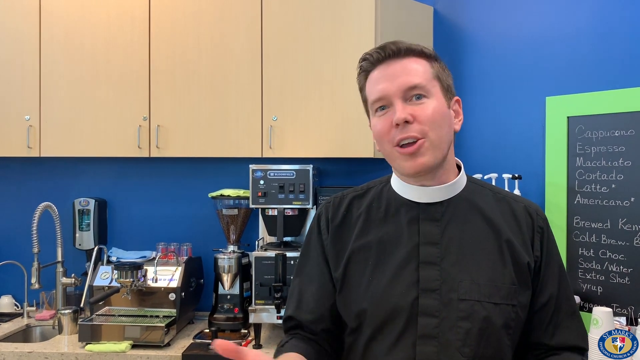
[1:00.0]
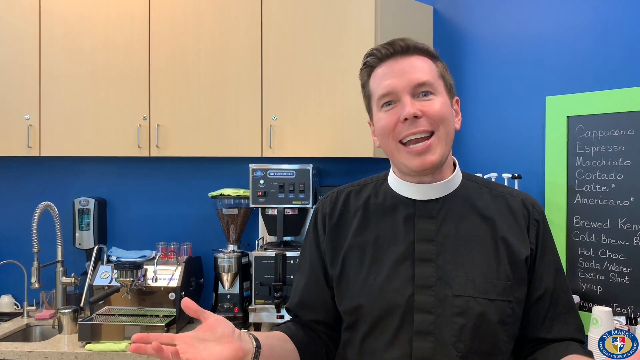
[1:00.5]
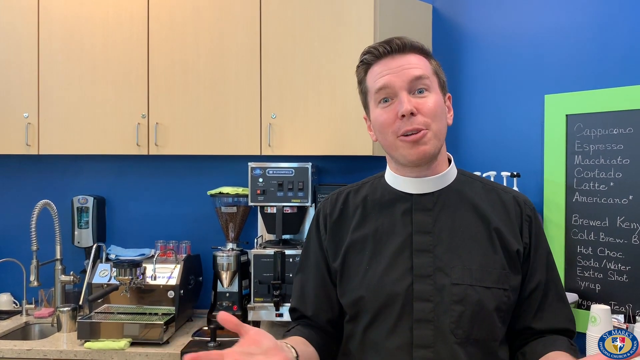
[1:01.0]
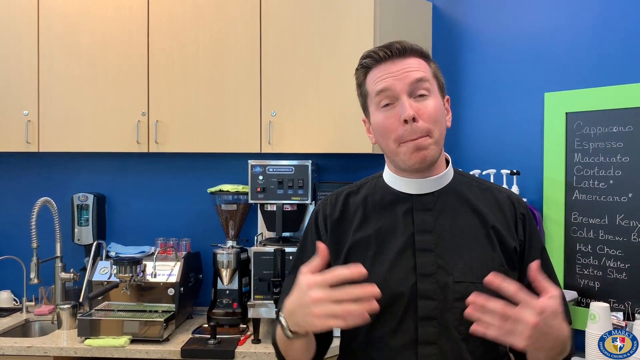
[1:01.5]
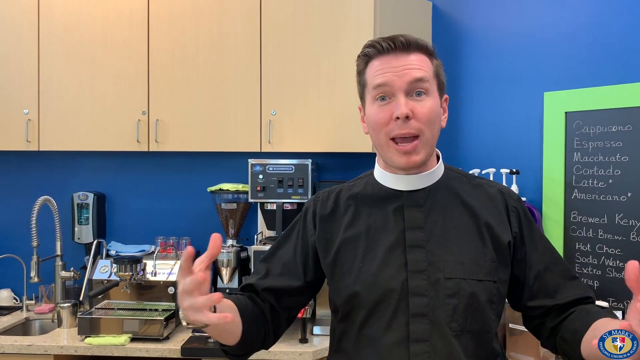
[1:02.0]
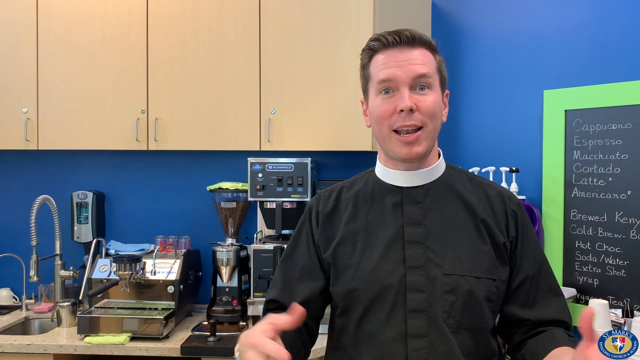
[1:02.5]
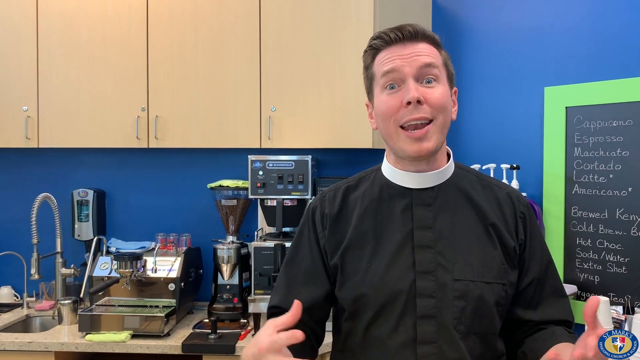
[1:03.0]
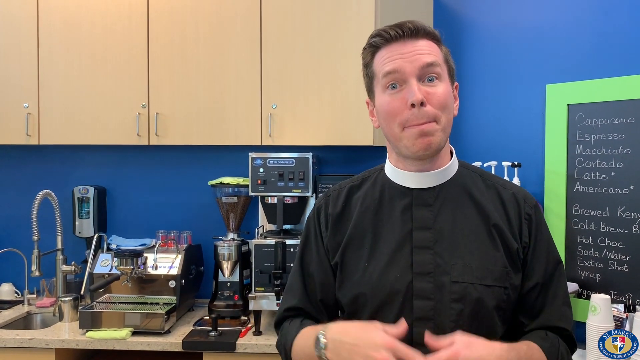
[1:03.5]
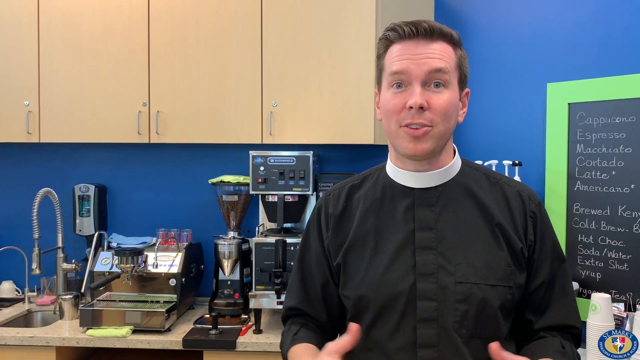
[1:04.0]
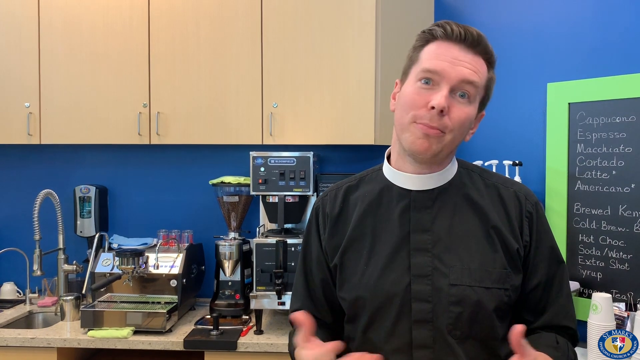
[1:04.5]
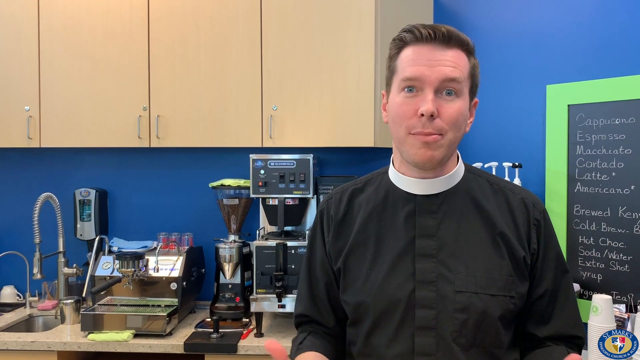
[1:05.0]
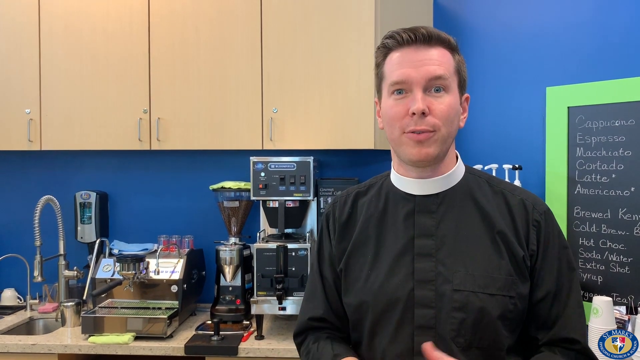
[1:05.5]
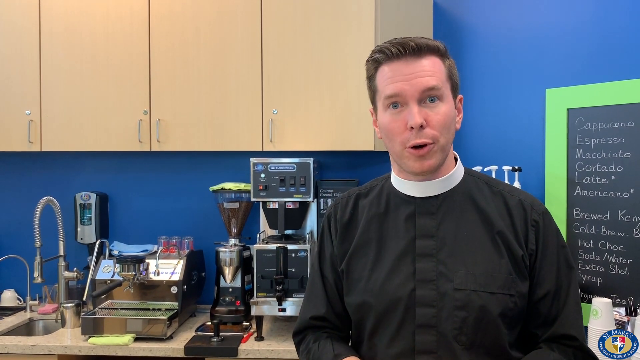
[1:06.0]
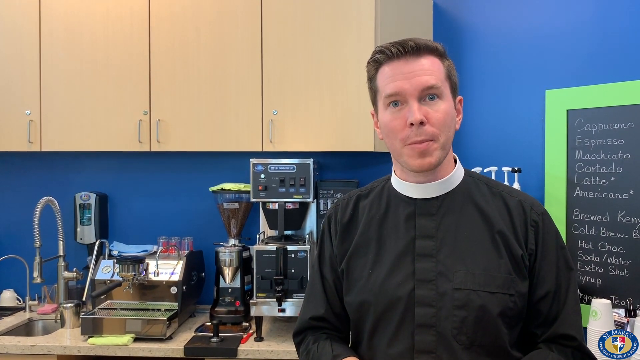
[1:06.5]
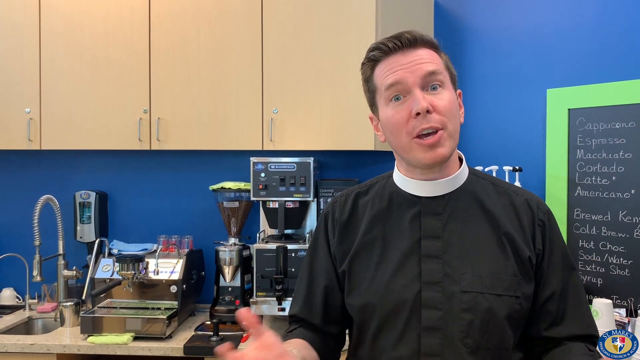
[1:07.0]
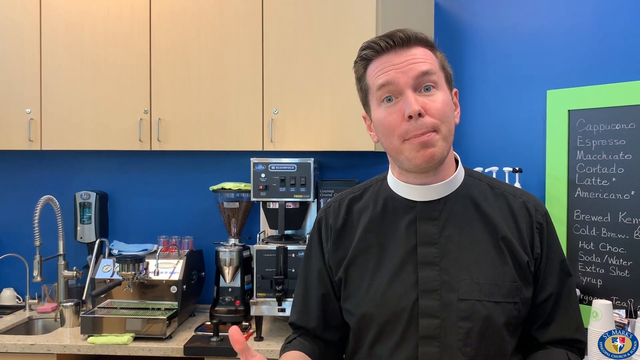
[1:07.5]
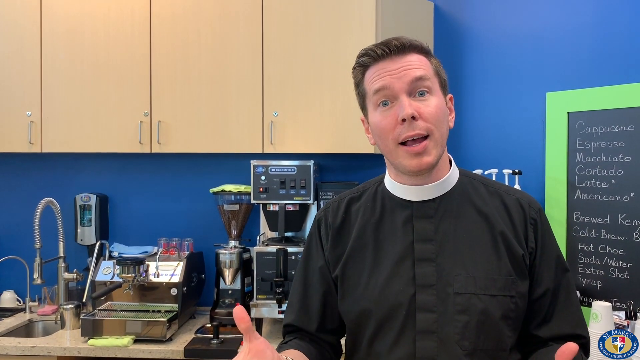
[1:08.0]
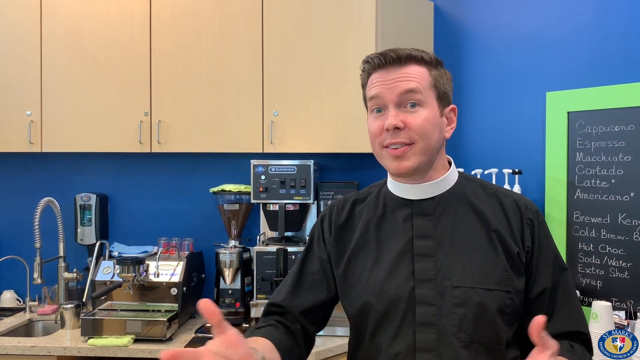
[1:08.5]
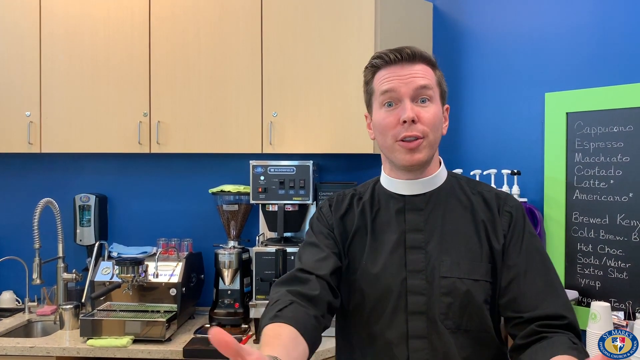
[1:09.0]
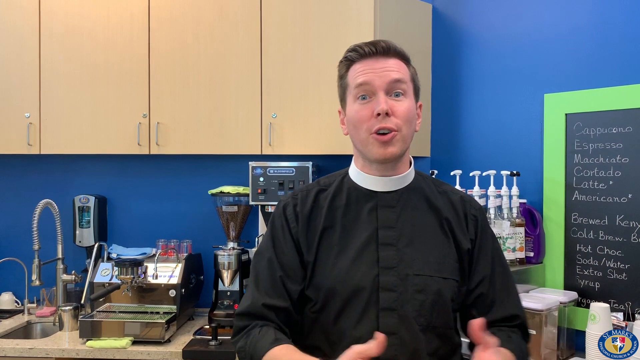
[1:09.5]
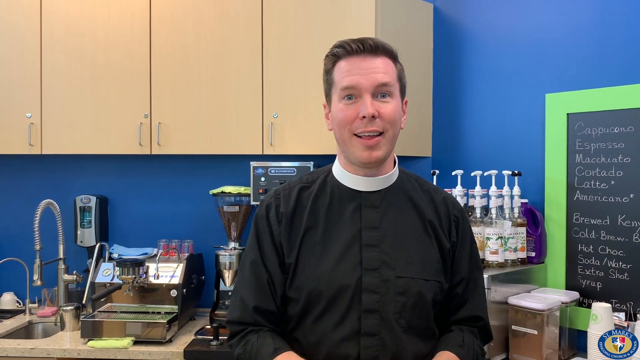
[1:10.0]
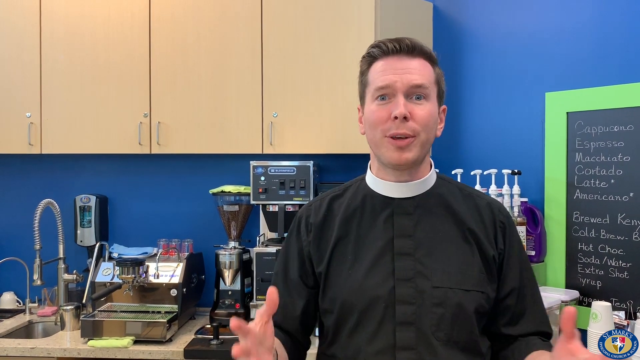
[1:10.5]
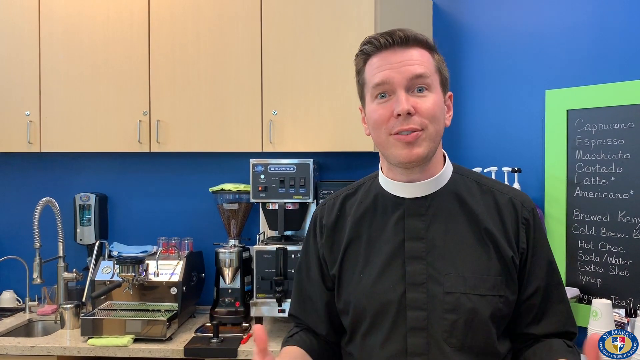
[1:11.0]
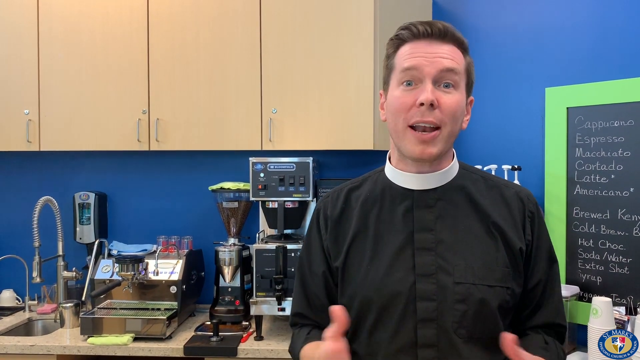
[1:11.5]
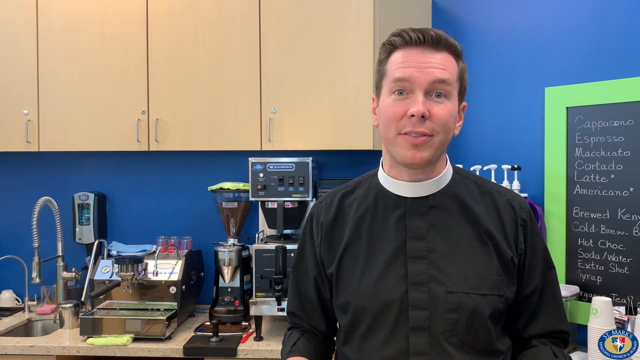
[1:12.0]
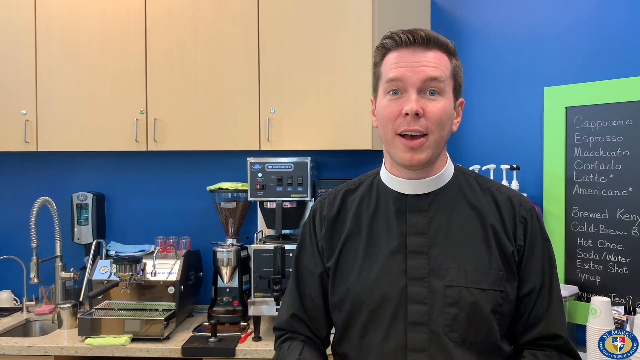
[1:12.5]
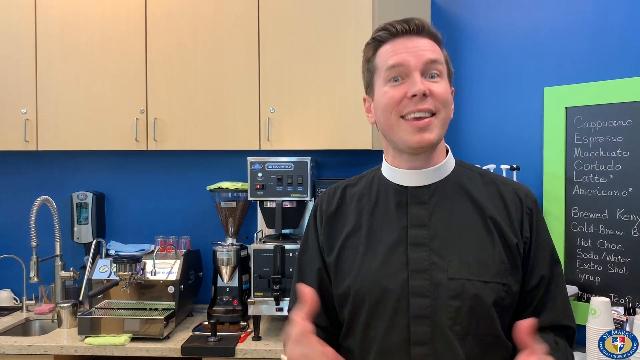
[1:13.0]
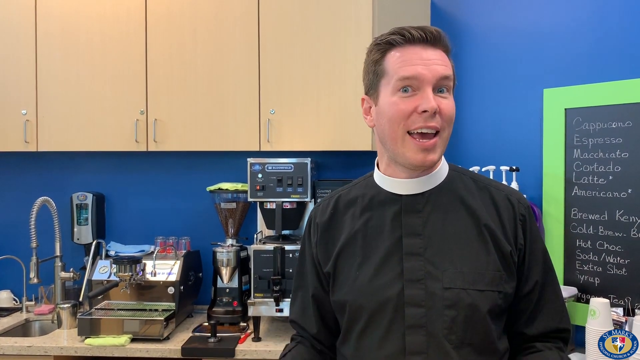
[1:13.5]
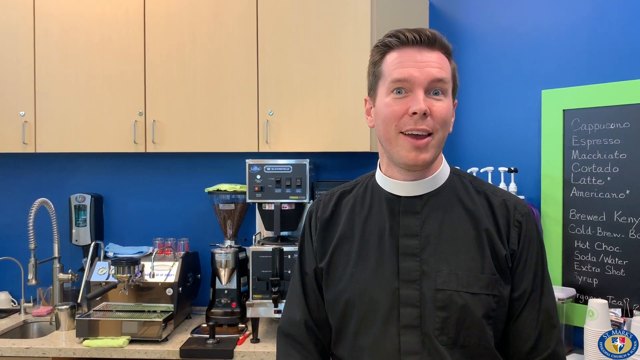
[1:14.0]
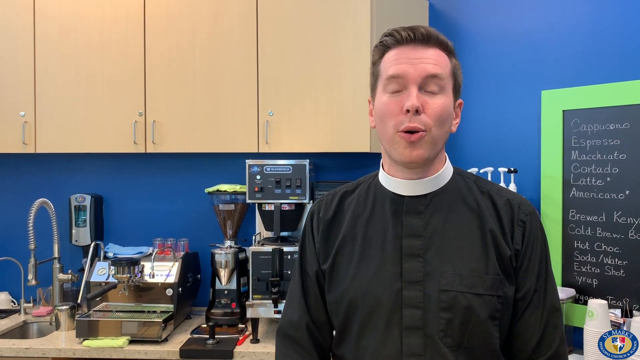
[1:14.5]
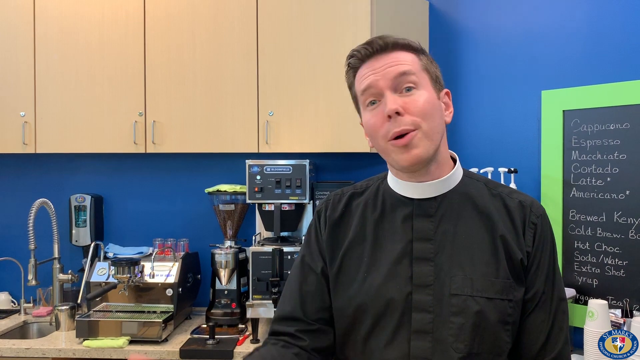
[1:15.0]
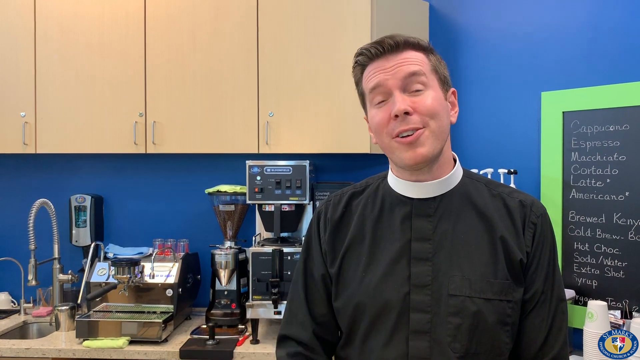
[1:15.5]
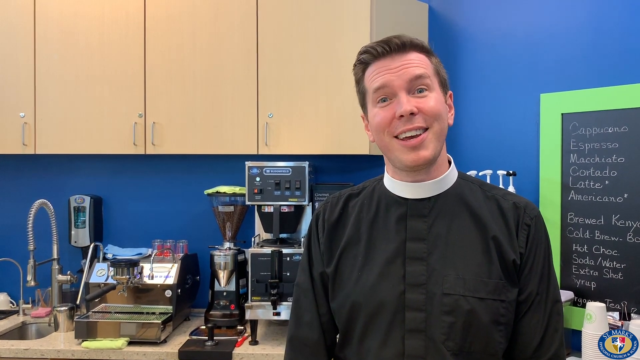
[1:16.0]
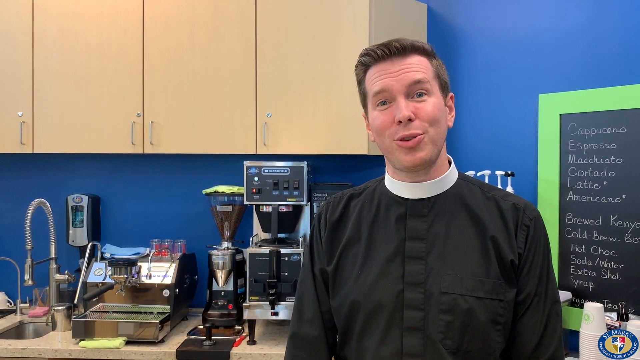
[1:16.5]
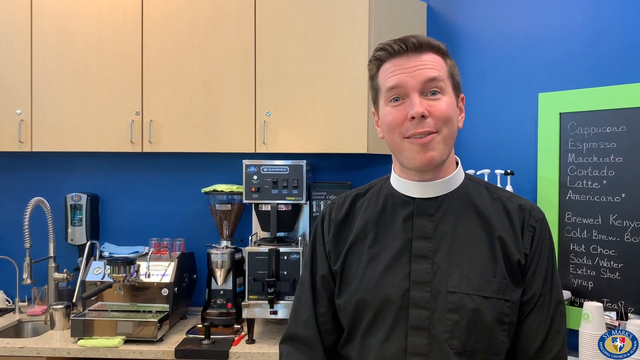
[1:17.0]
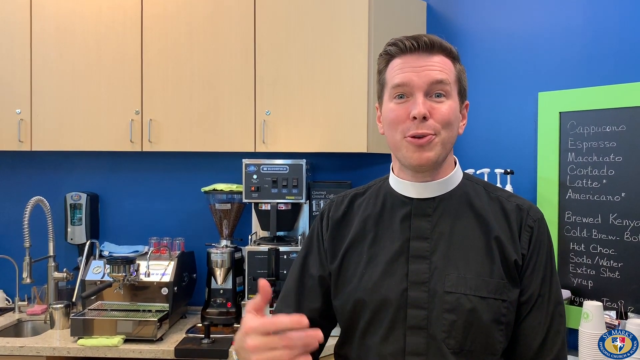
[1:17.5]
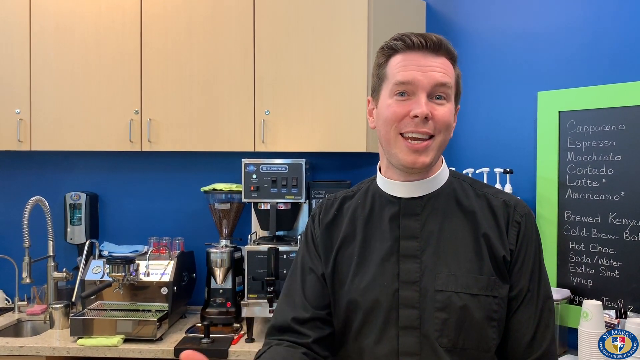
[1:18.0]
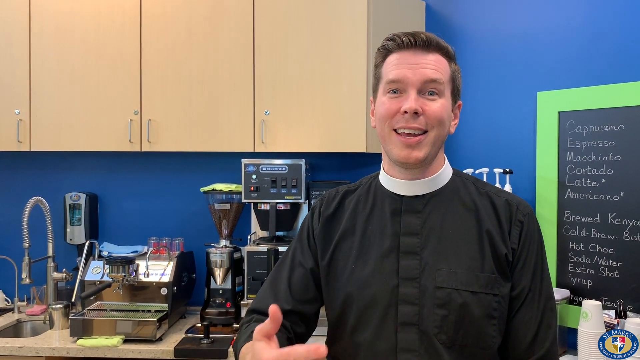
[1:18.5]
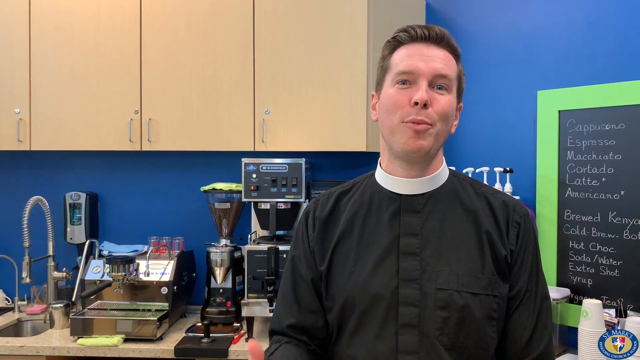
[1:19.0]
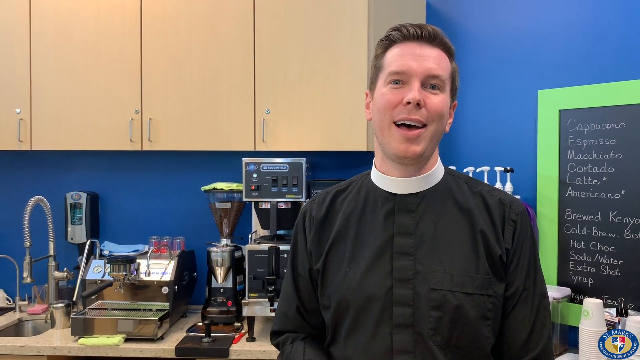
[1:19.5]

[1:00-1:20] The Reverend makes wider gestures with his hands this time, in what looks like a very inviting gesture with his arms, putting a lot of emphasis on talking with his hands. His face still looks calm and inviting, not over the top. Behind him are three coffee machines and a single basin sink with an oversized faucet; a tin can is next to the faucet, and a soap dispenser is behind it. Below the chalkboard to his right are a paper clip and a stack of paper cups.